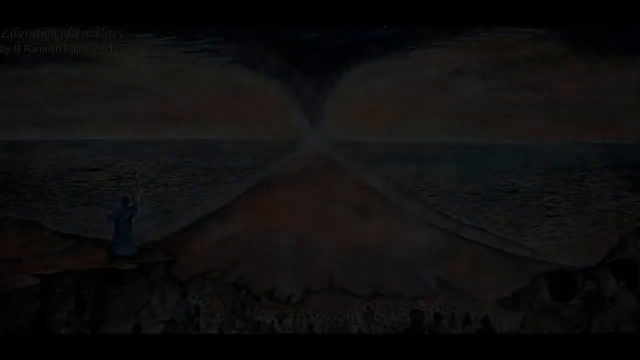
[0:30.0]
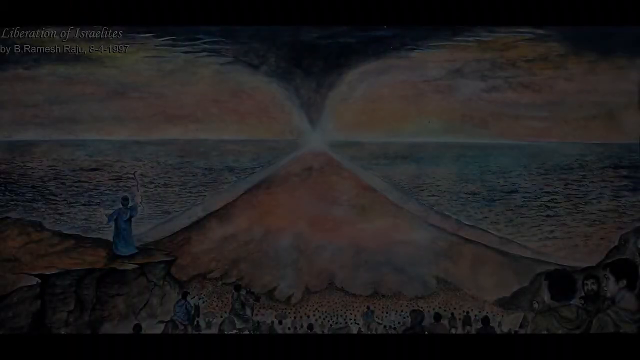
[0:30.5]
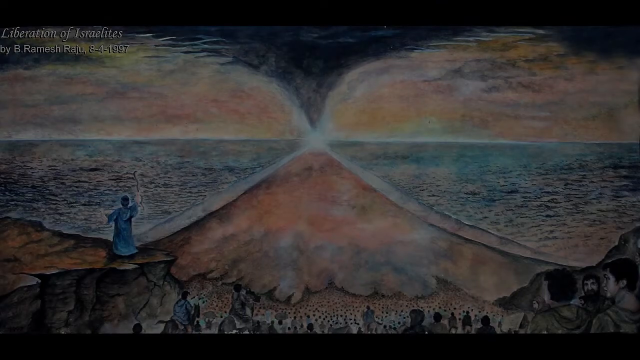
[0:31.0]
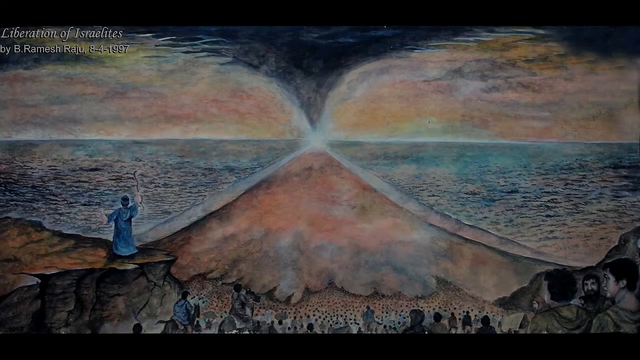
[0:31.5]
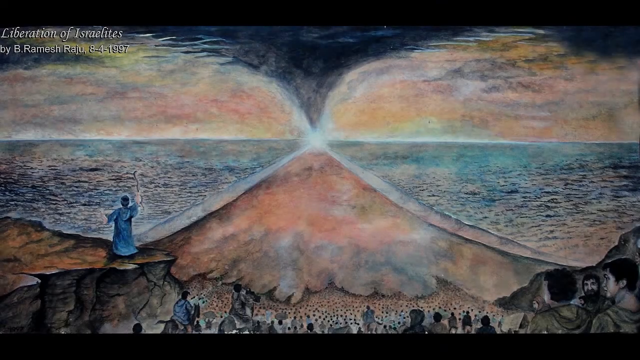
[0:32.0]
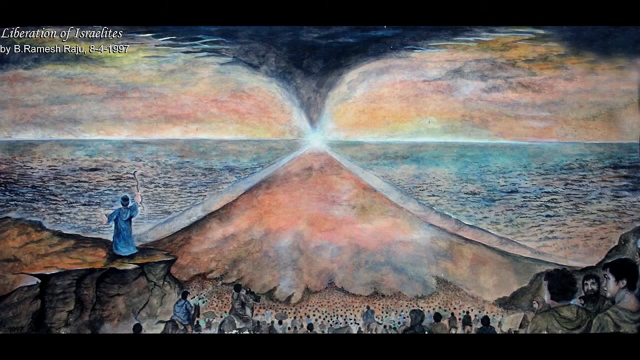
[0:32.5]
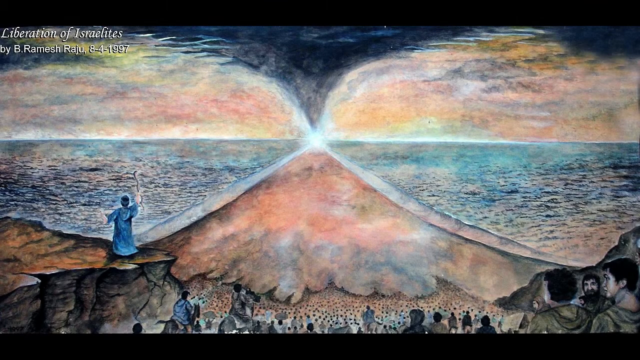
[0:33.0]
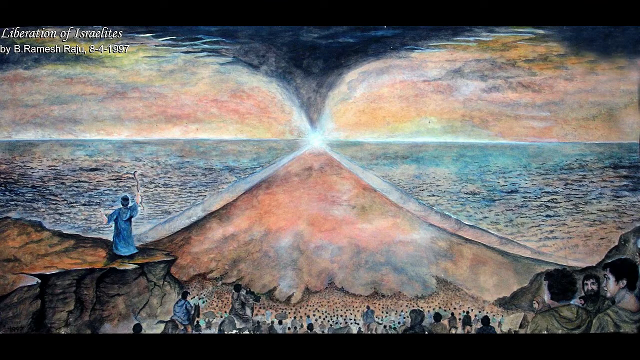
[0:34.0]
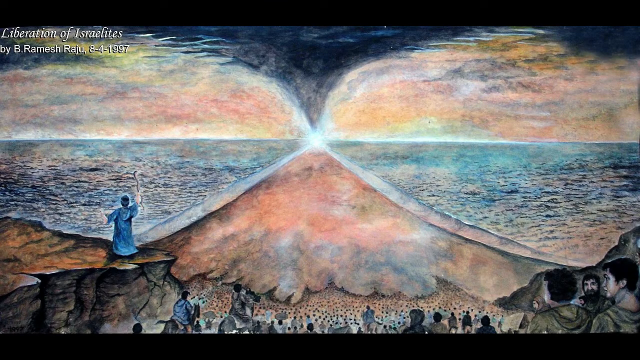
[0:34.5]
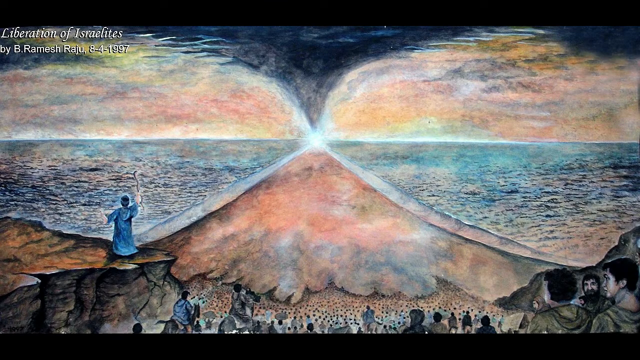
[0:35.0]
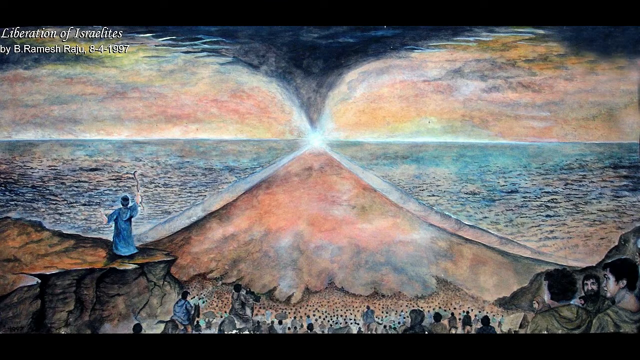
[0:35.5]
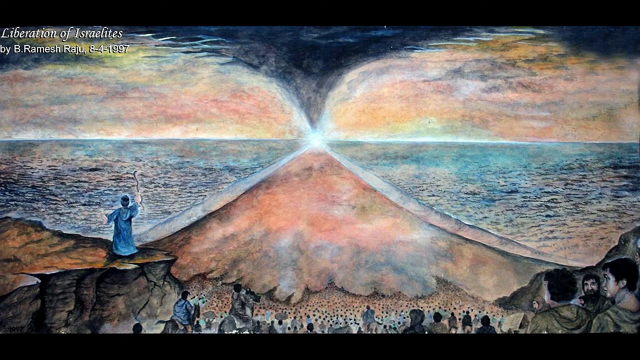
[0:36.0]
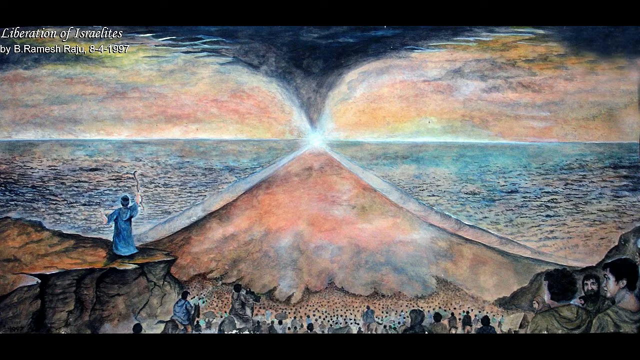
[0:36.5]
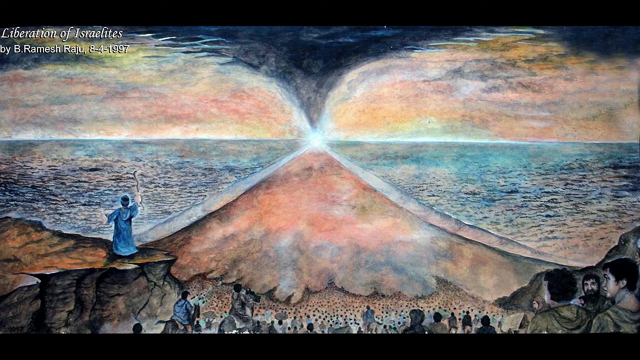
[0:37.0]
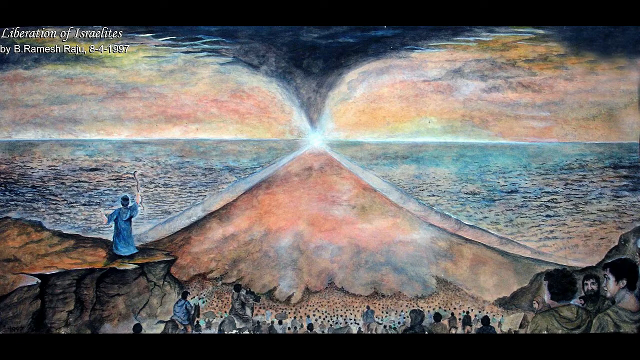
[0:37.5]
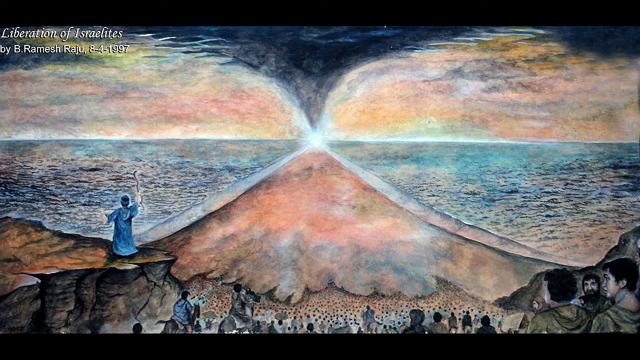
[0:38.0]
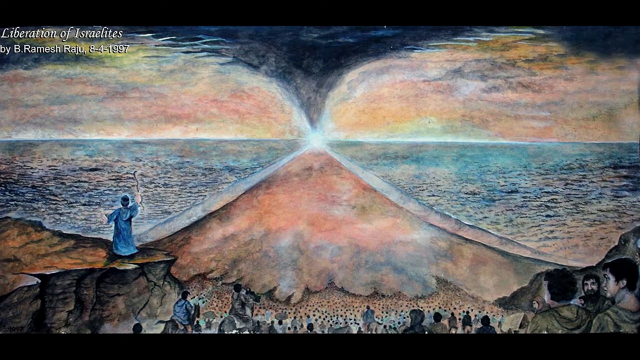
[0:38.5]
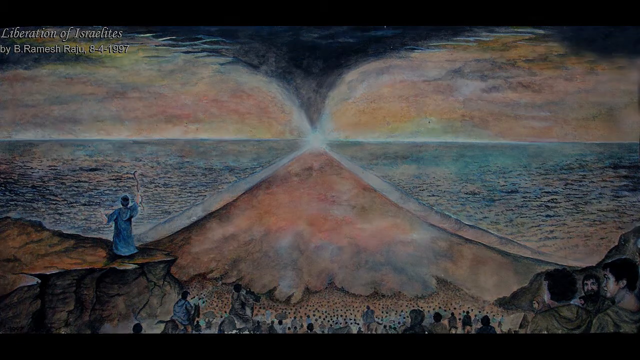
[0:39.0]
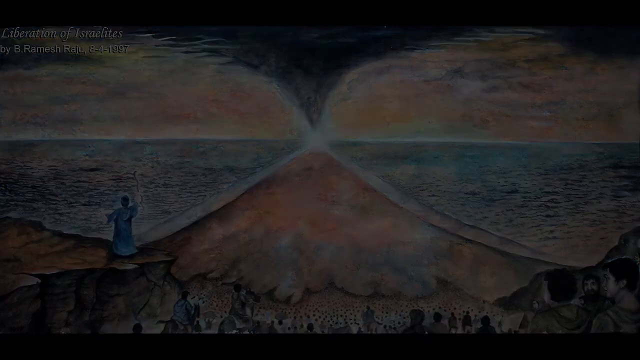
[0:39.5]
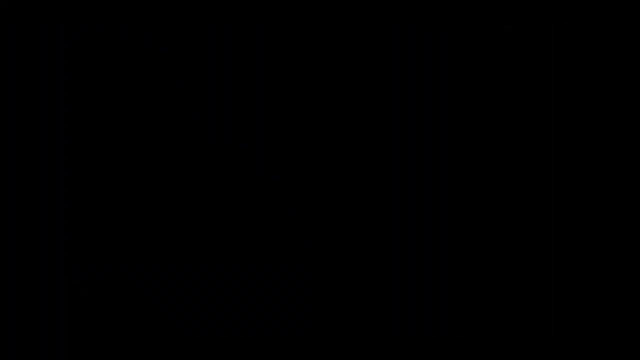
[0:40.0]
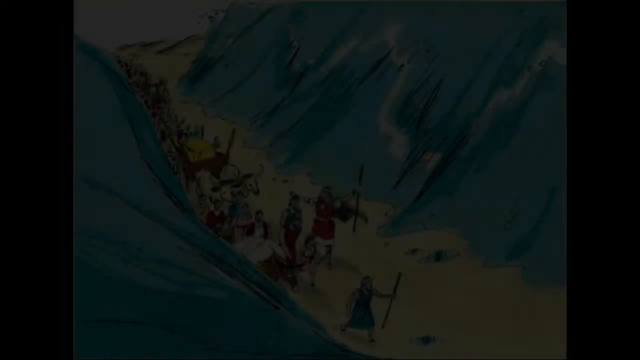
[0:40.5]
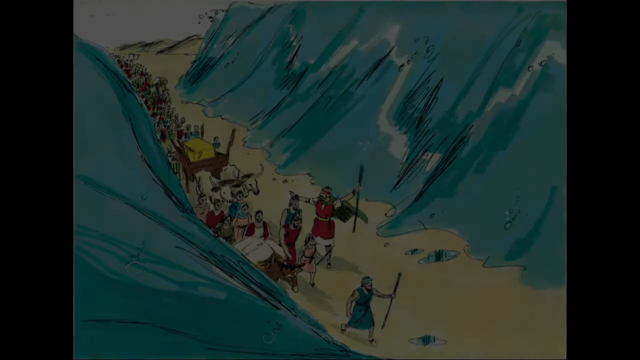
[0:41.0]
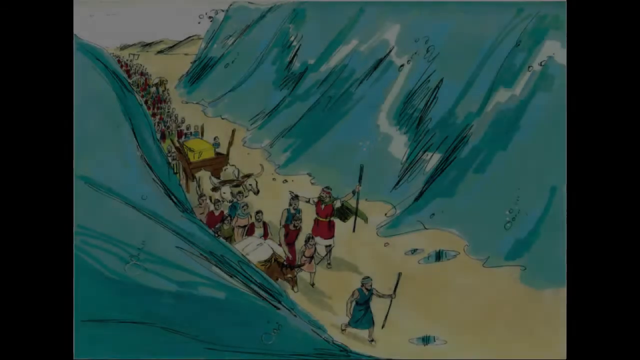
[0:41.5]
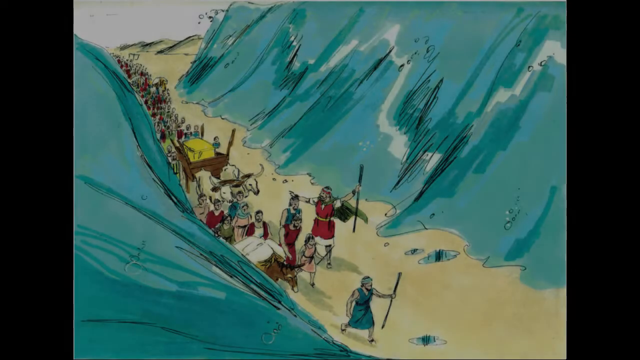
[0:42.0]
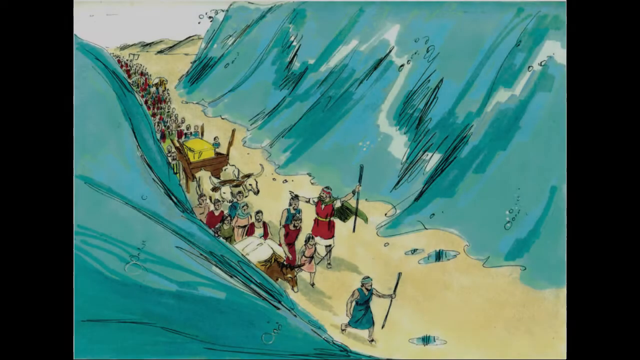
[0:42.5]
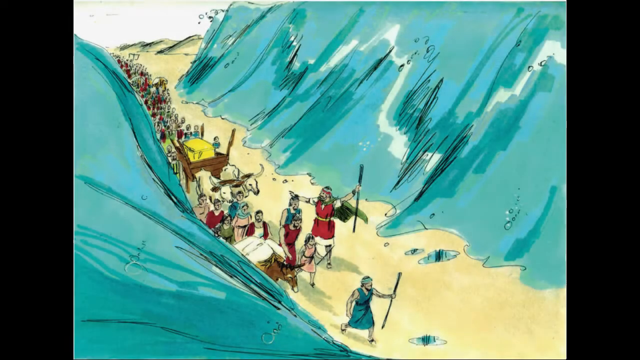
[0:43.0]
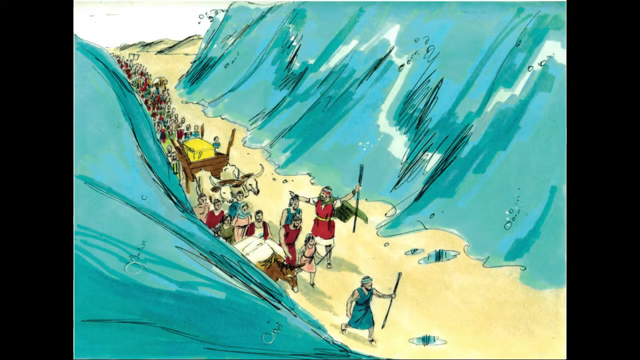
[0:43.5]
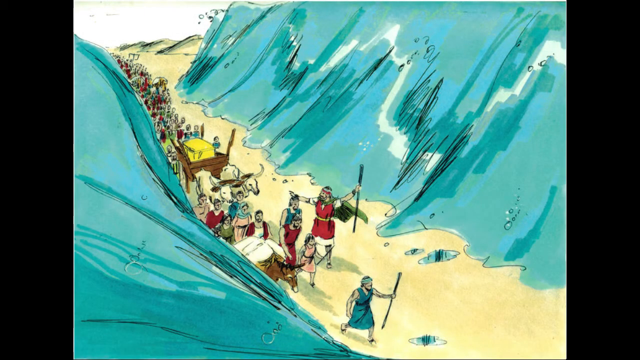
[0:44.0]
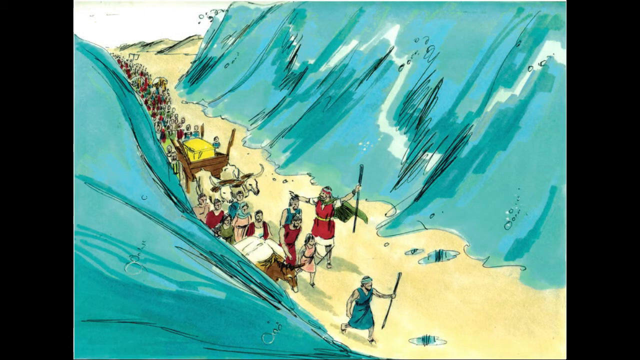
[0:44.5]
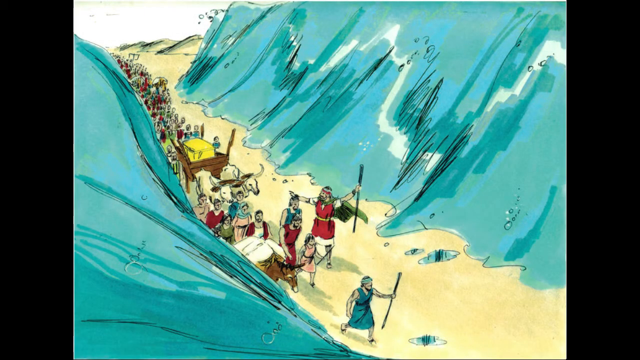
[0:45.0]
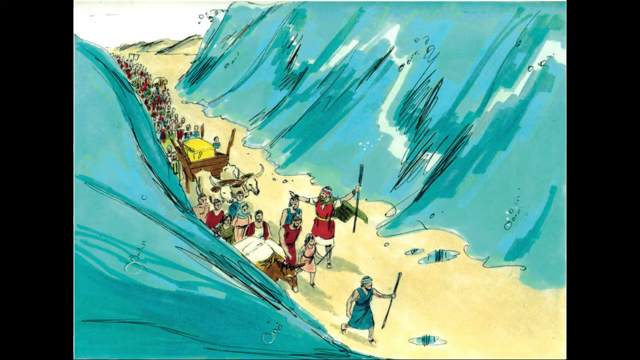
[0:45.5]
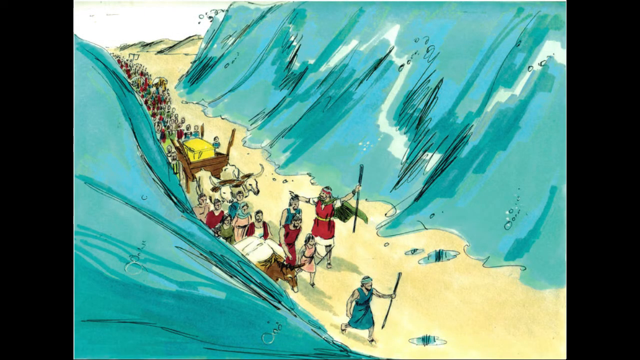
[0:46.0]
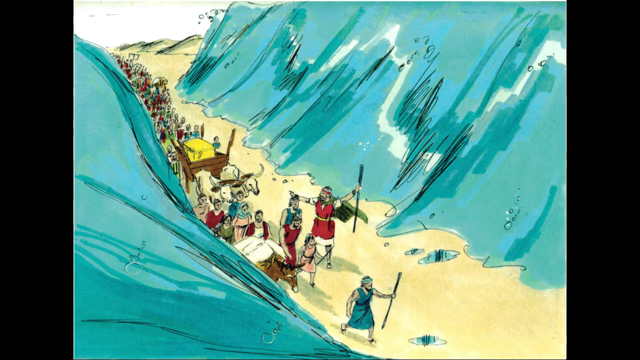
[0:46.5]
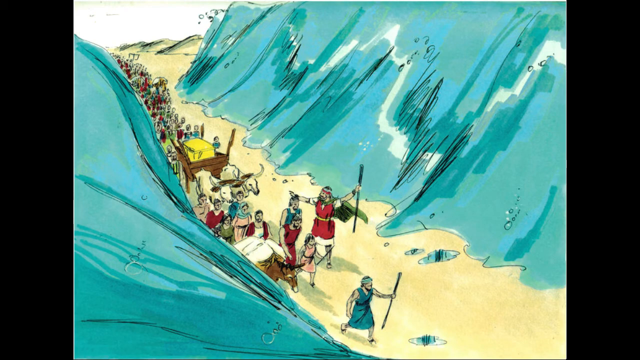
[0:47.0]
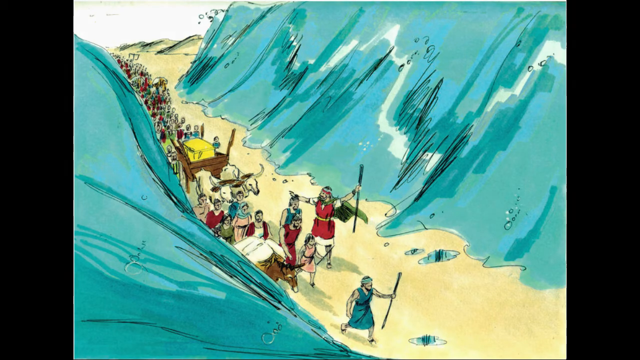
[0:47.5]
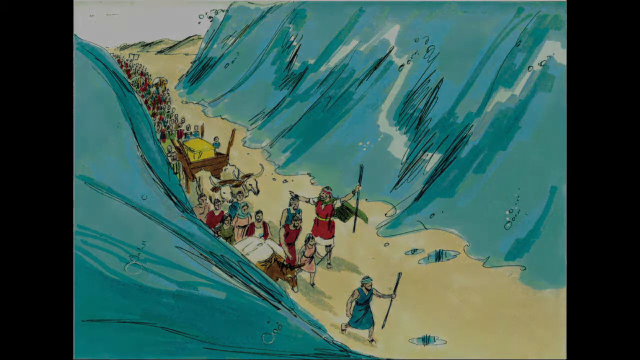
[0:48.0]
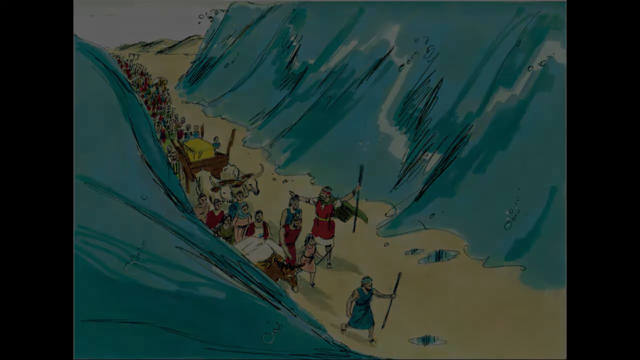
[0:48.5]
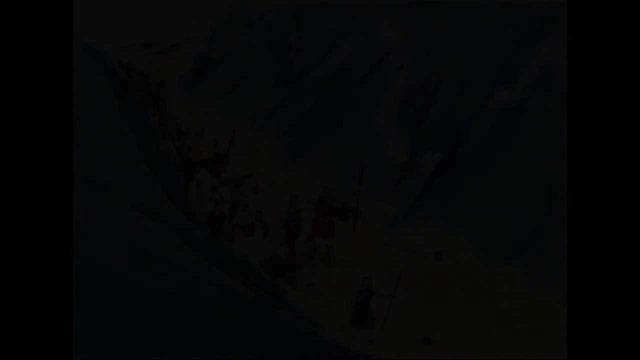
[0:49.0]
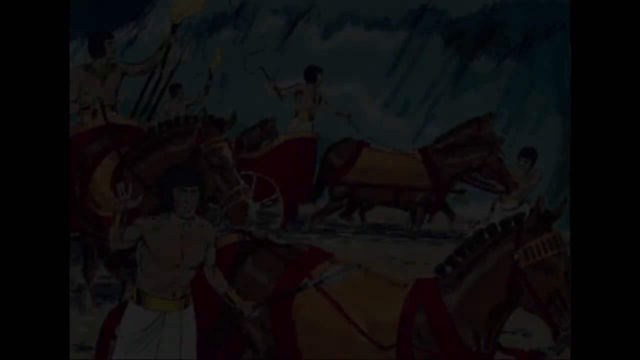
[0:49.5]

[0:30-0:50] Water rises on two sides, and there are many vehicles and many animals. The scene seems very ancient, with no modern vehicles or technology; the vehicles all appear handmade, and animals are used to pull the vehicles and carry the people's belongings. The imagery does not look colorful.